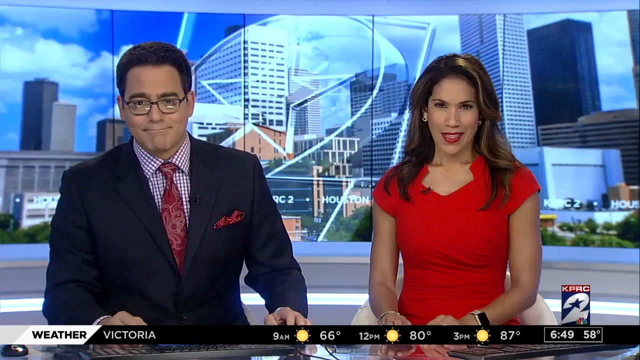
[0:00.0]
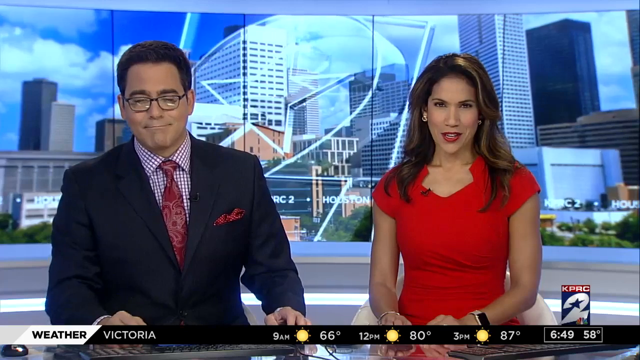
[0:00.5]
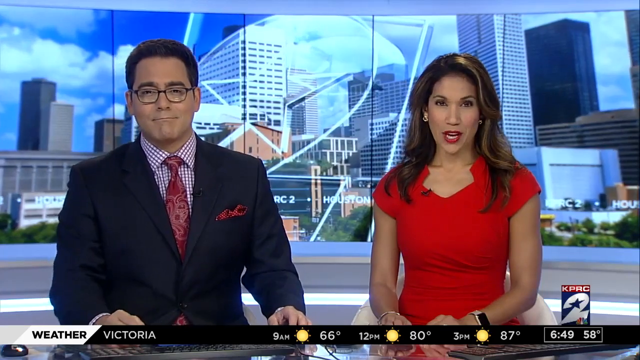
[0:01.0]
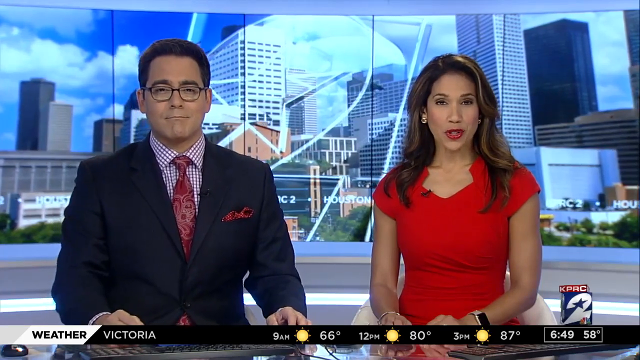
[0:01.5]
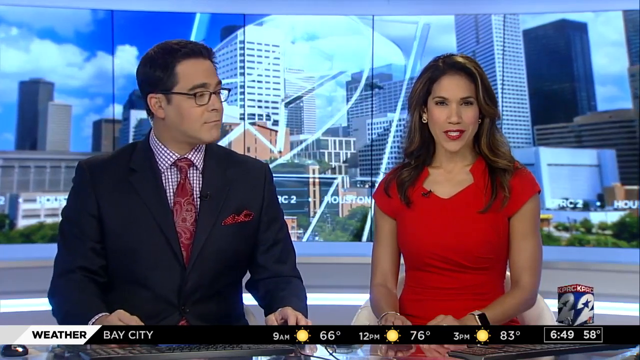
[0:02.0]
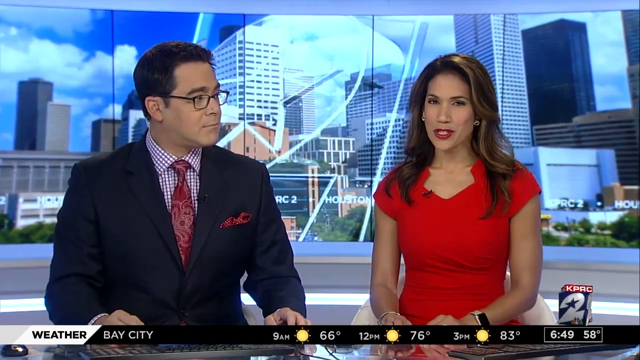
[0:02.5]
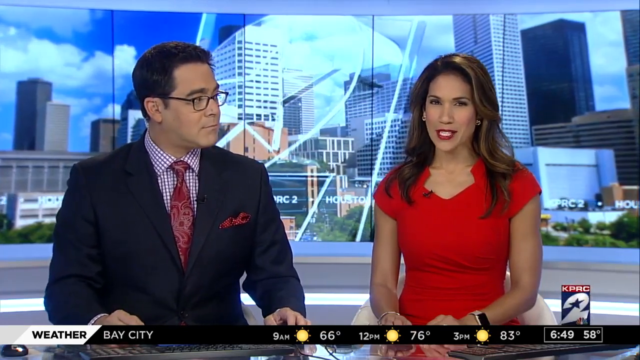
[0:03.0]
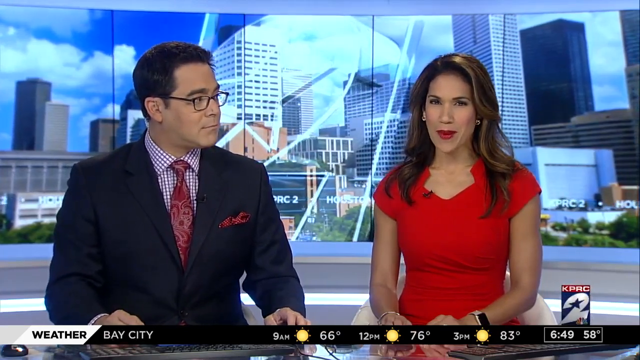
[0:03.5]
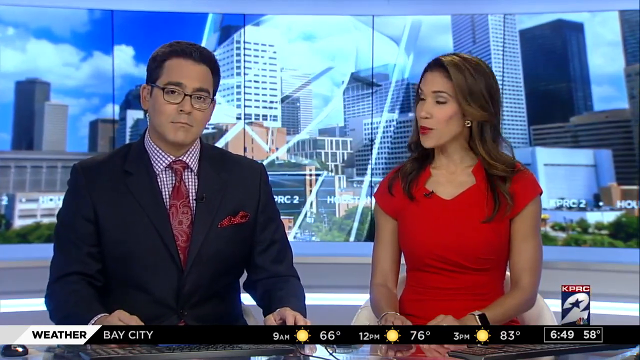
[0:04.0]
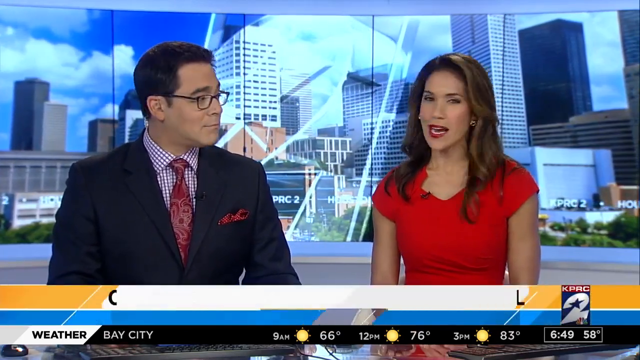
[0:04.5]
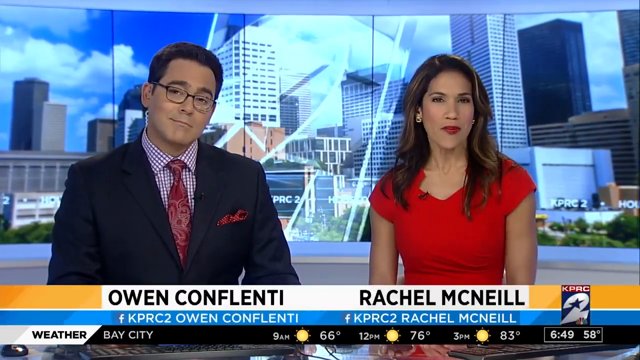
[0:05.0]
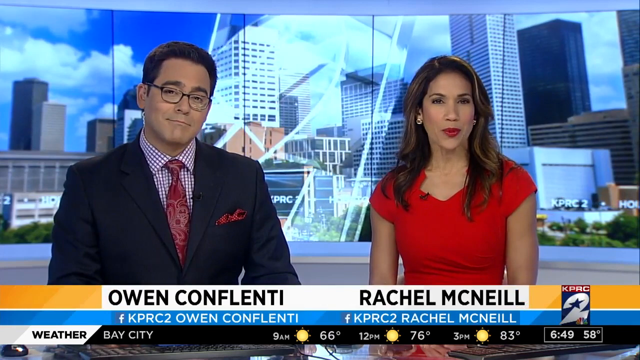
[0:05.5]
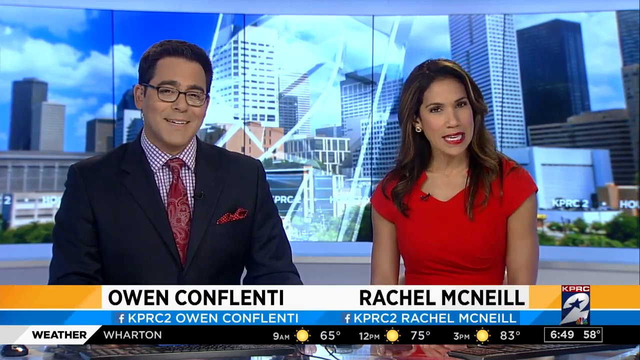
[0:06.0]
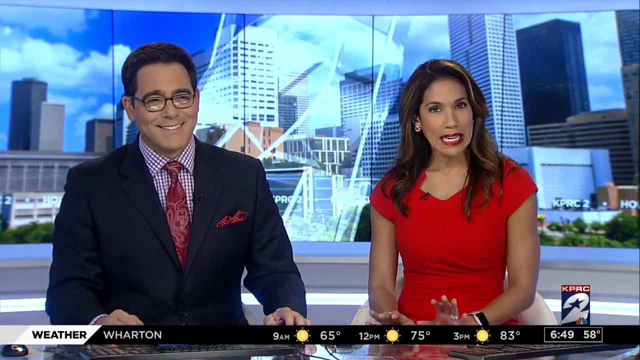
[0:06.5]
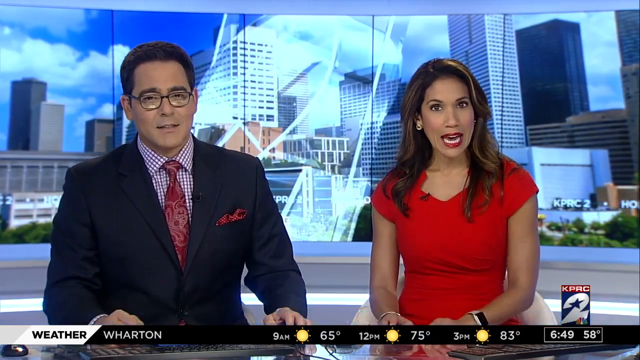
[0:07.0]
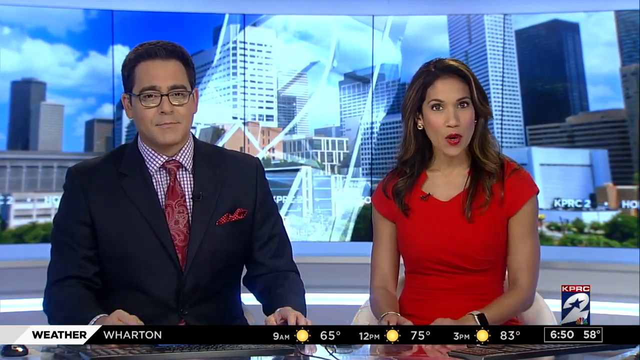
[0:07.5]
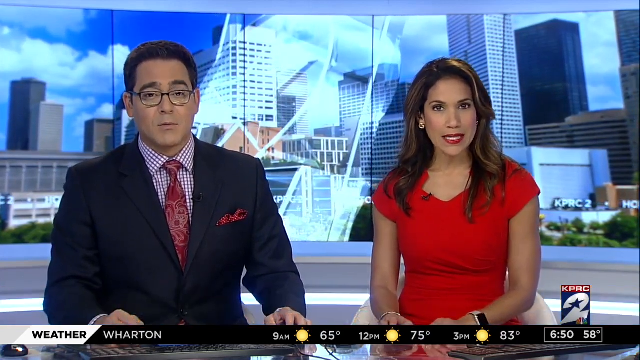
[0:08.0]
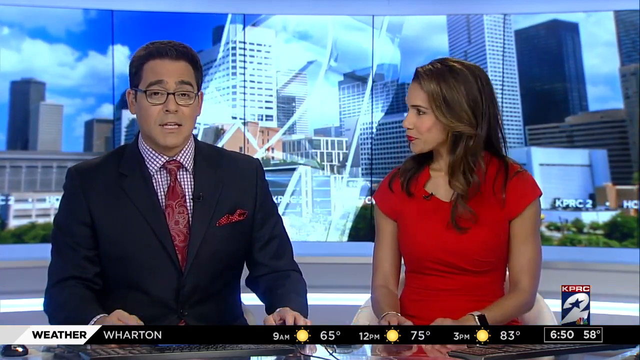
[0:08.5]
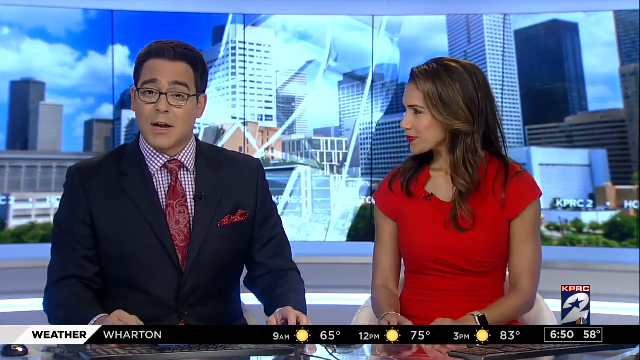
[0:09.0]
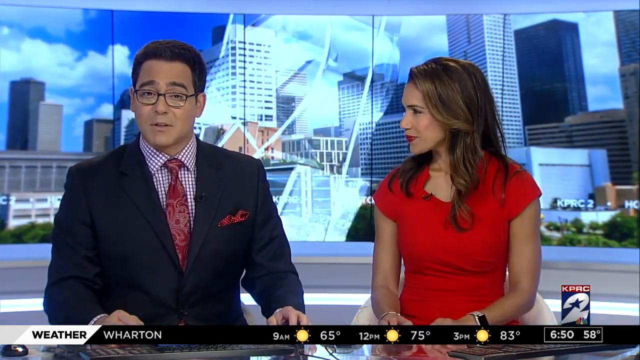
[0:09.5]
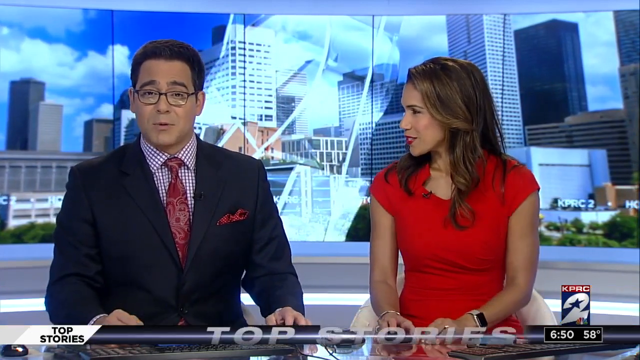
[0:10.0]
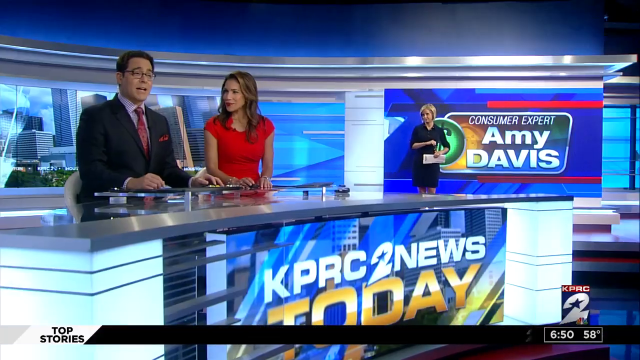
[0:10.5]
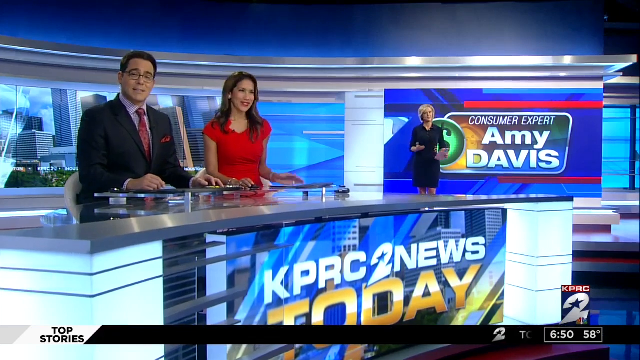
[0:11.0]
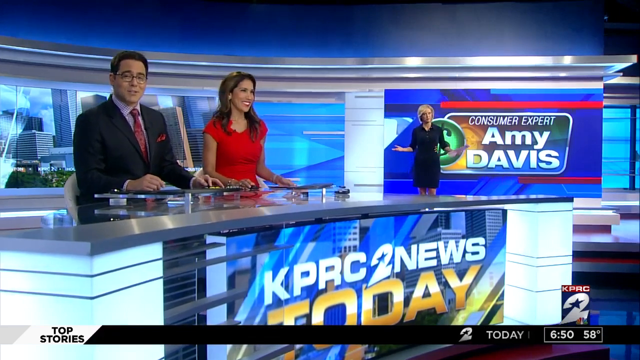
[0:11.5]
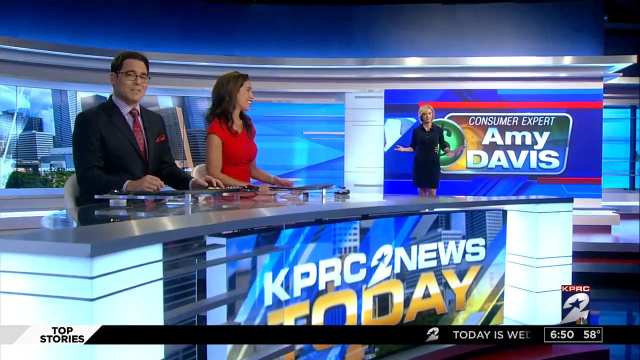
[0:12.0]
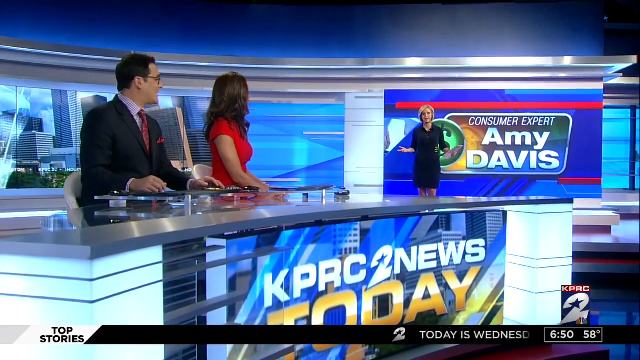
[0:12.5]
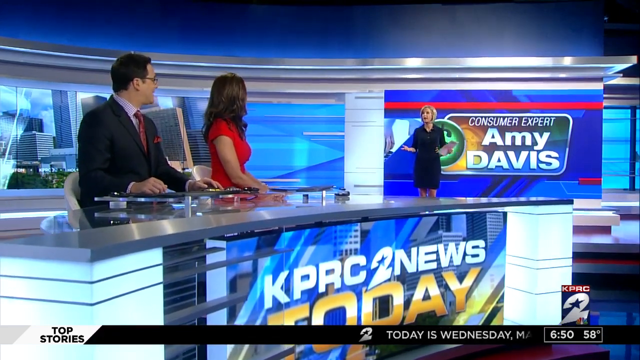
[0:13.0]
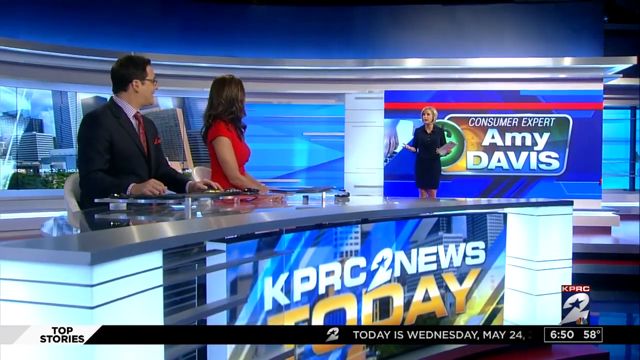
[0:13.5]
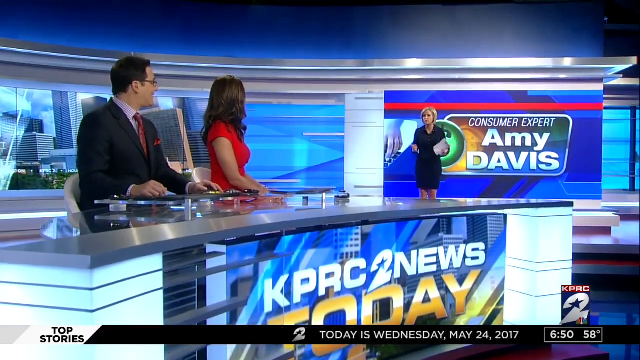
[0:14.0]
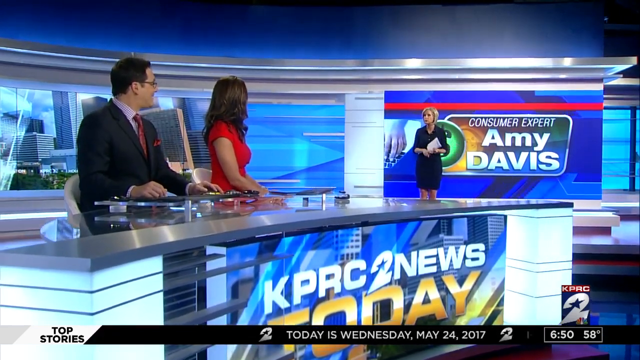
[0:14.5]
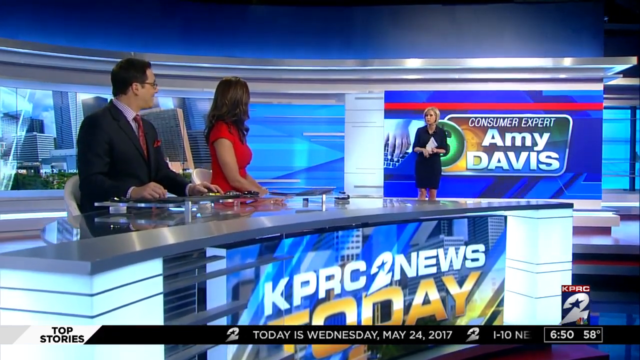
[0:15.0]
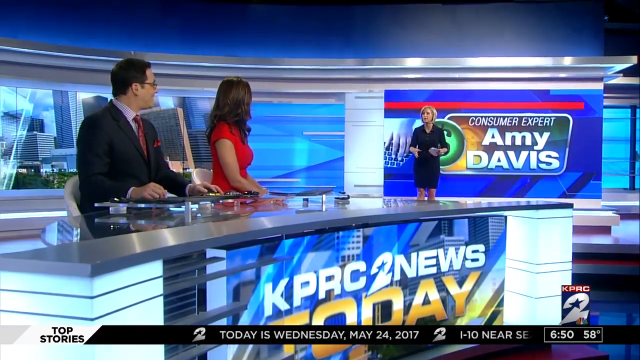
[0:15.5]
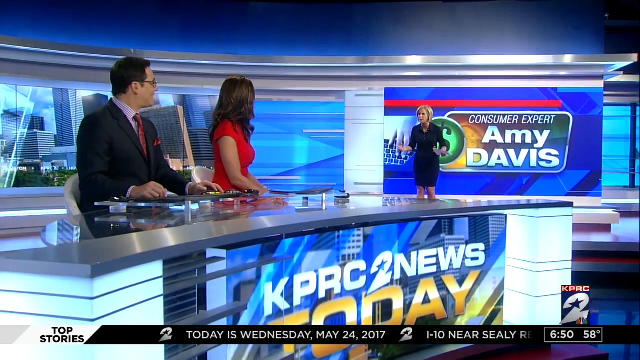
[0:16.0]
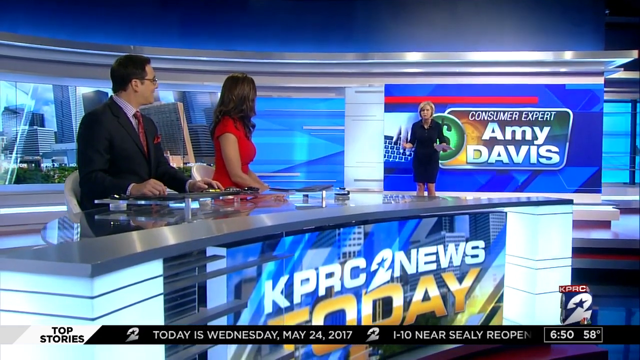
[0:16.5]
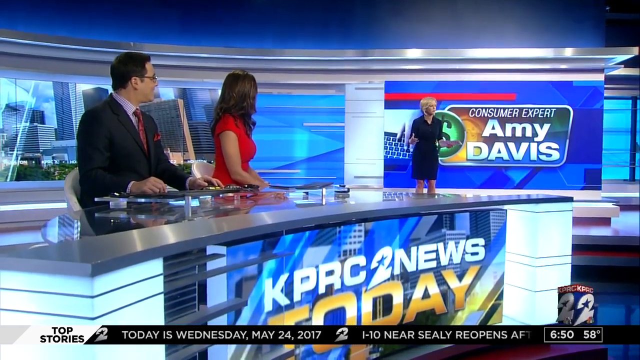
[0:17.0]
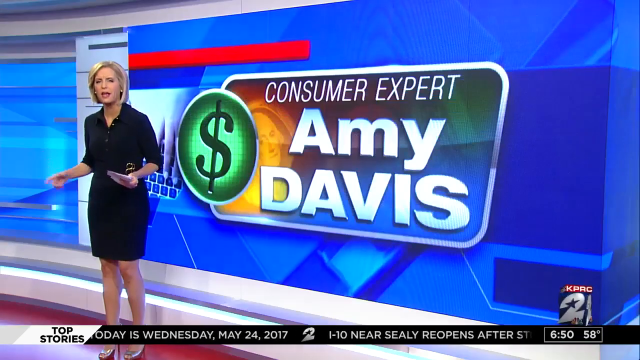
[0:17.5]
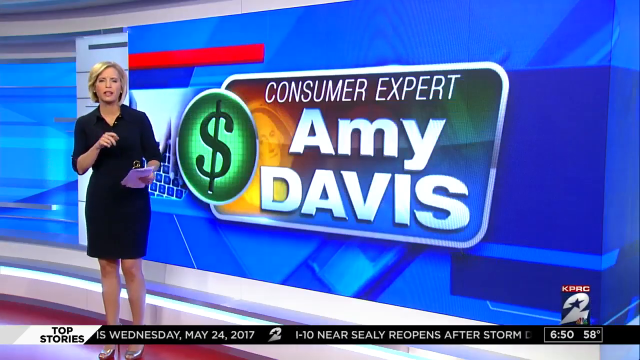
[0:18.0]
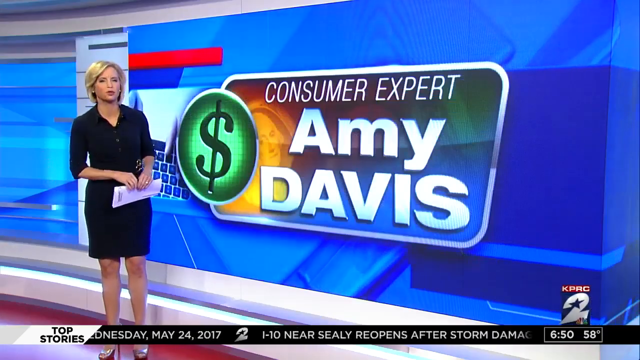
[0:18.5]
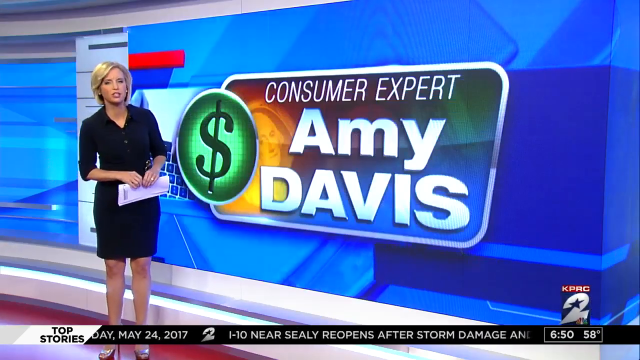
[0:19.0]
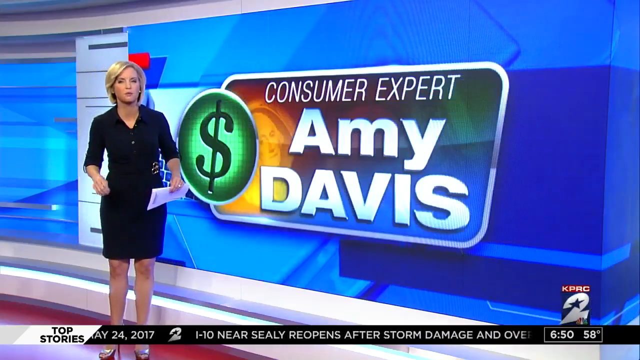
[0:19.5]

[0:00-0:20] What looks to be two people giving a news report appear on screen, a man on the left and a woman on the right. Their names come up and disappear within about two seconds: the man's name, on the left, is "Owen Conlinty," and the woman's name, on the bottom right, is "Rachel McNeagle." Right below both names are their Facebook names, next to the station they work for, "KBRC-2." The two talk briefly, then the shot cuts to a woman on the far right whom they look towards; her name is Amy Davis, and she is a consumer expert. The camera focuses on her as well as the screen to the right of her.